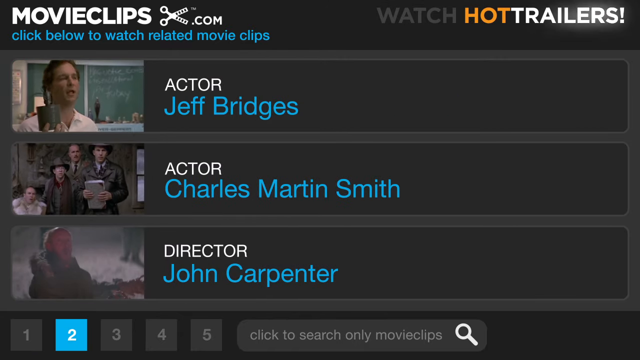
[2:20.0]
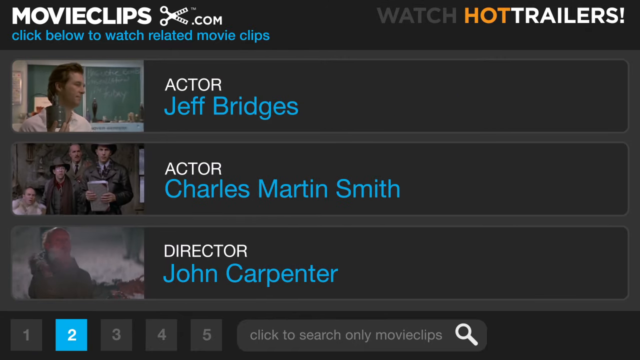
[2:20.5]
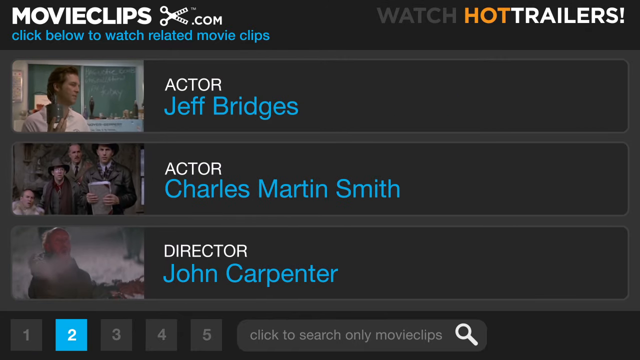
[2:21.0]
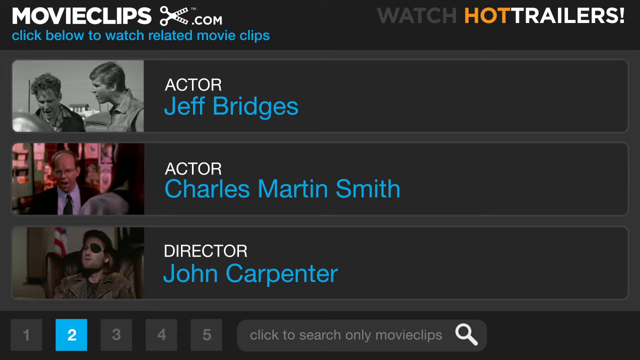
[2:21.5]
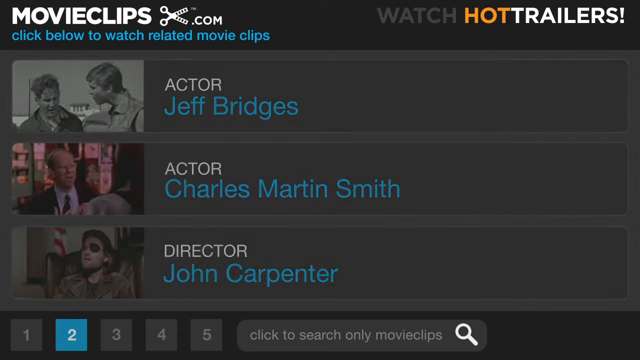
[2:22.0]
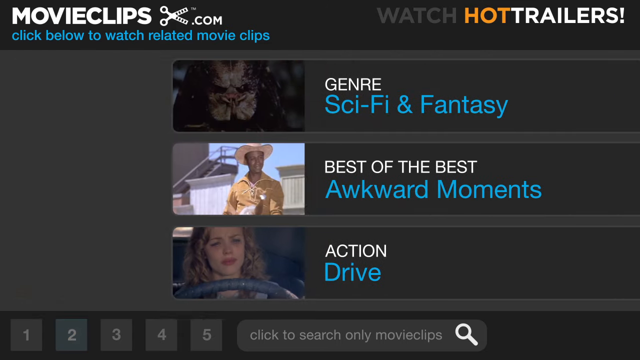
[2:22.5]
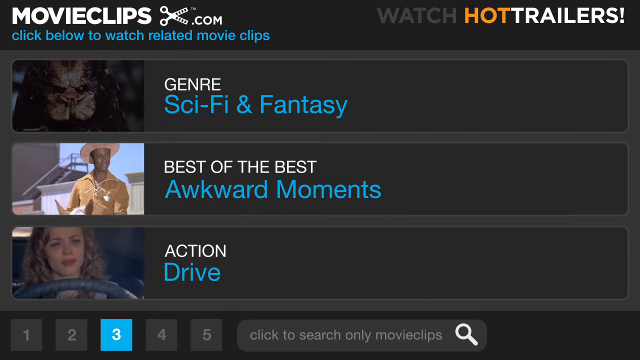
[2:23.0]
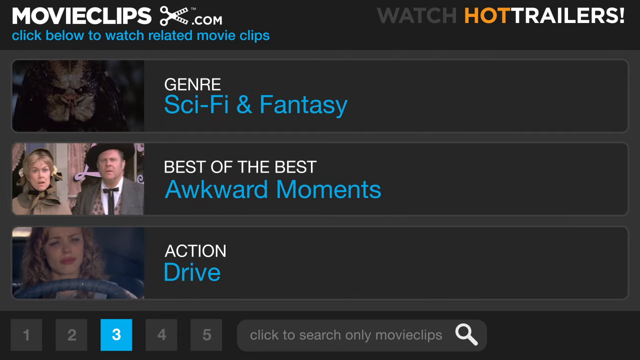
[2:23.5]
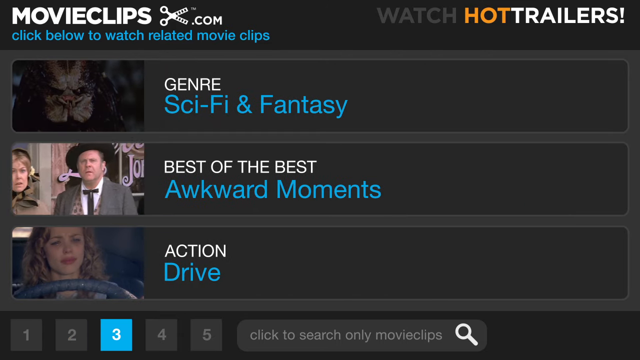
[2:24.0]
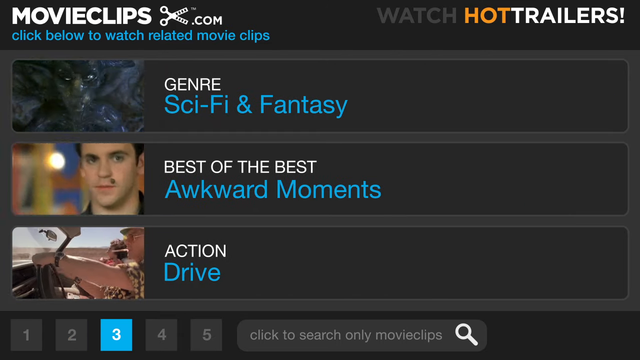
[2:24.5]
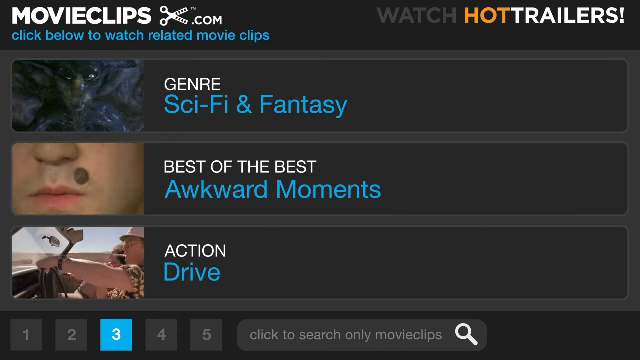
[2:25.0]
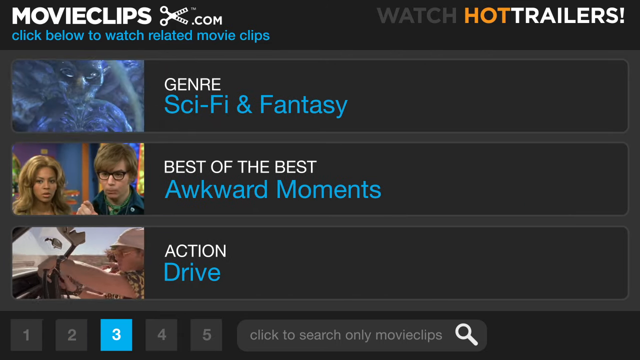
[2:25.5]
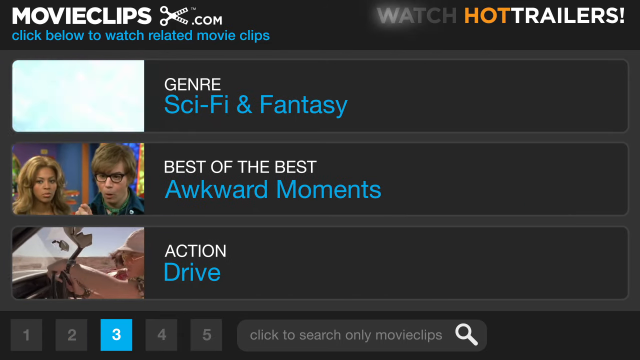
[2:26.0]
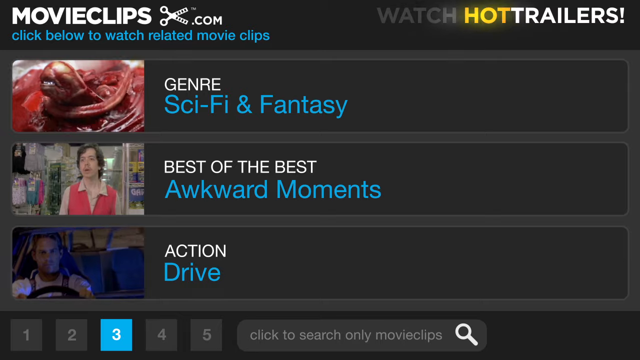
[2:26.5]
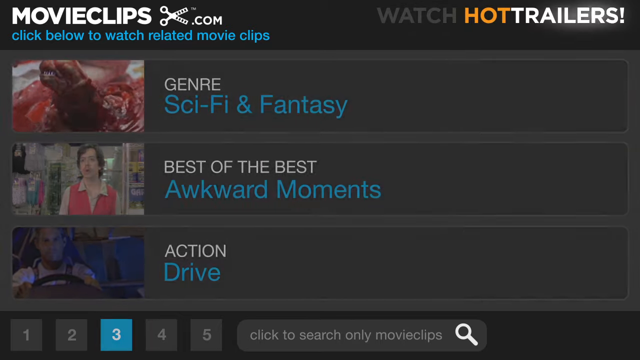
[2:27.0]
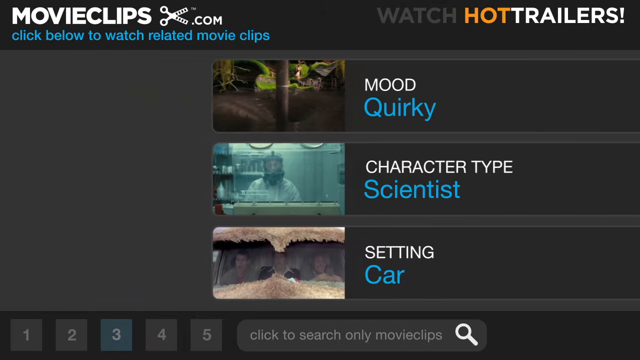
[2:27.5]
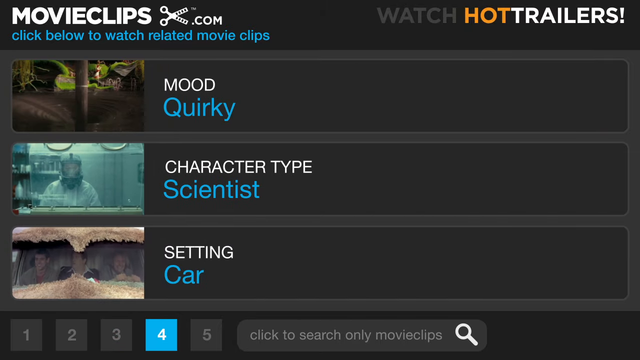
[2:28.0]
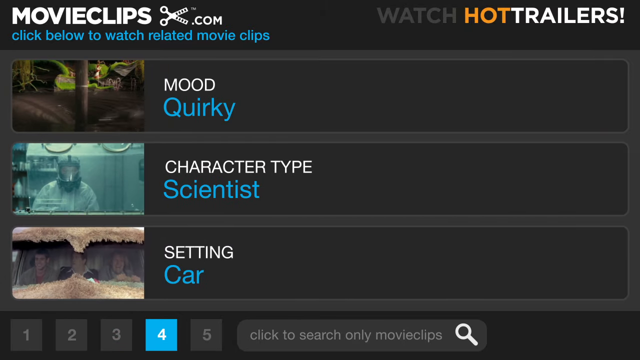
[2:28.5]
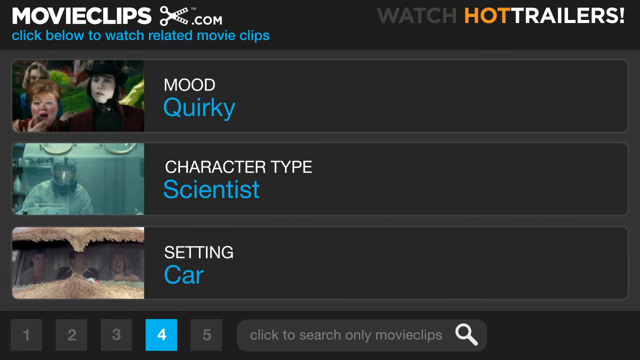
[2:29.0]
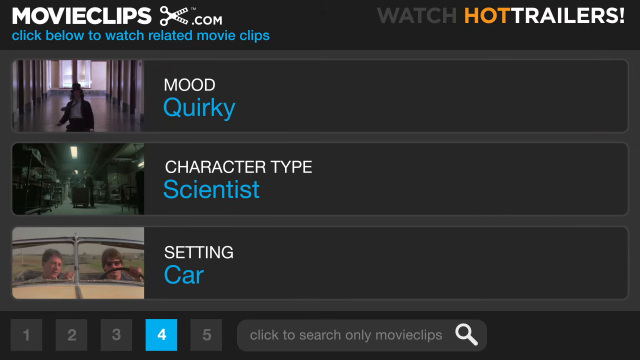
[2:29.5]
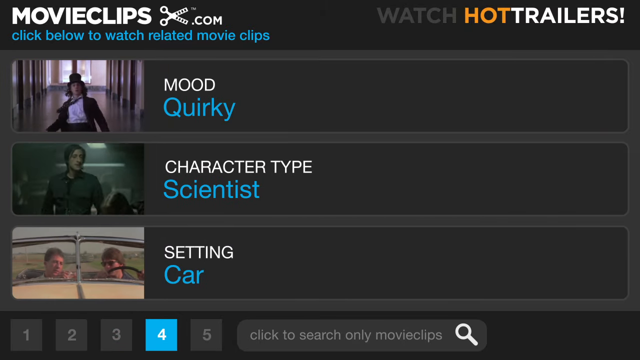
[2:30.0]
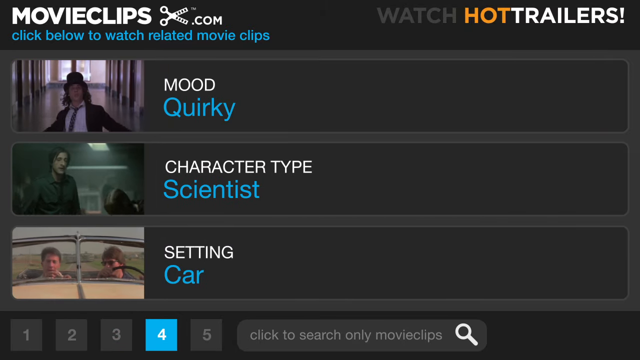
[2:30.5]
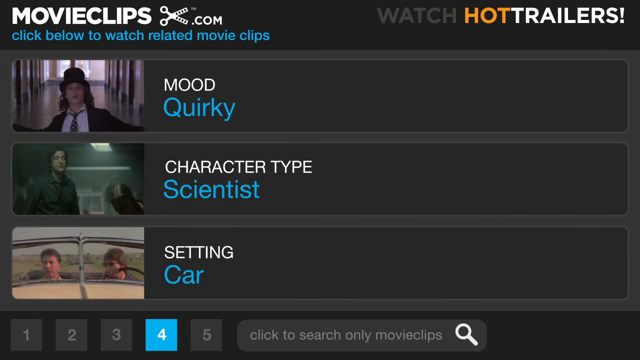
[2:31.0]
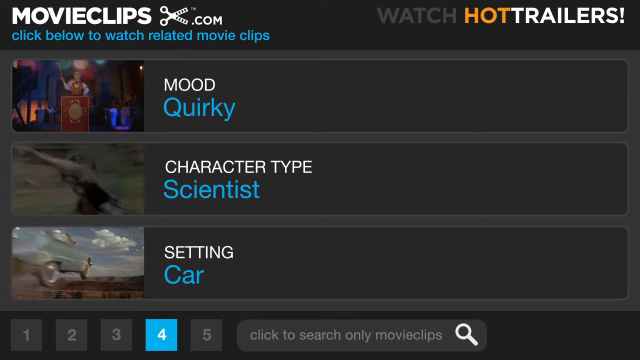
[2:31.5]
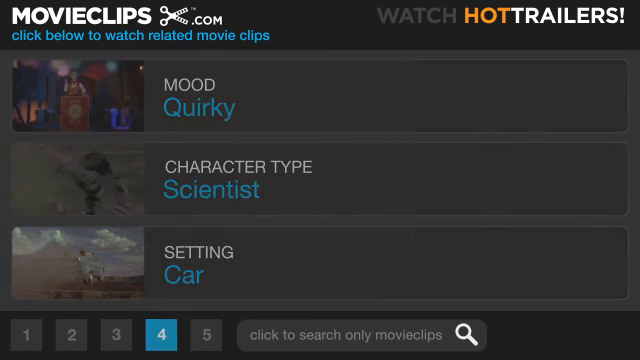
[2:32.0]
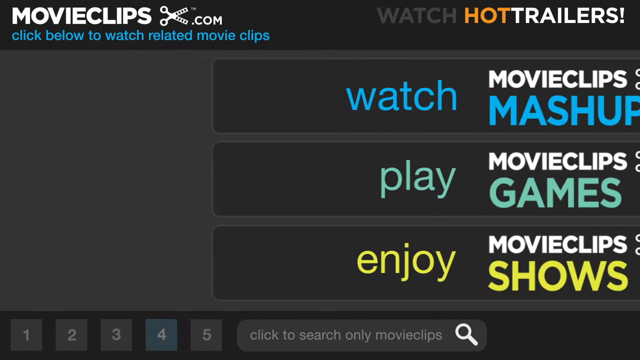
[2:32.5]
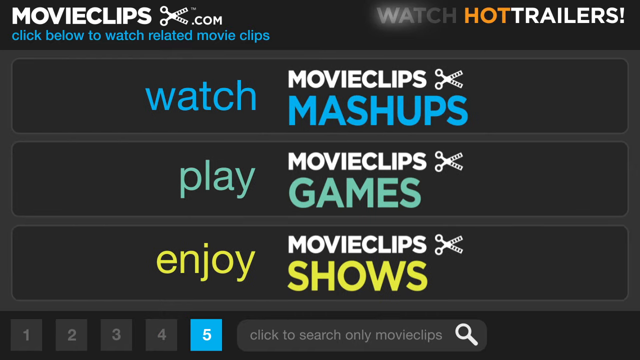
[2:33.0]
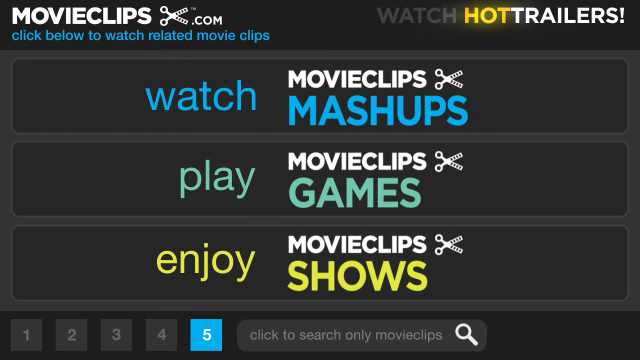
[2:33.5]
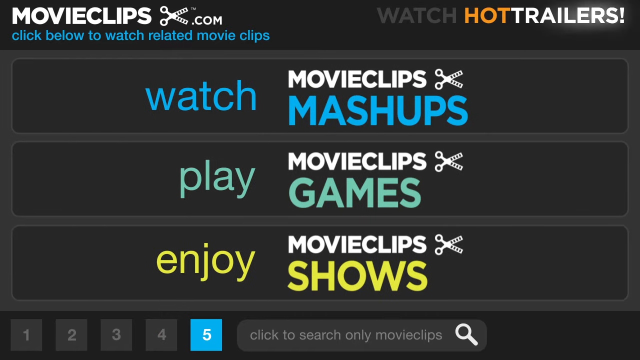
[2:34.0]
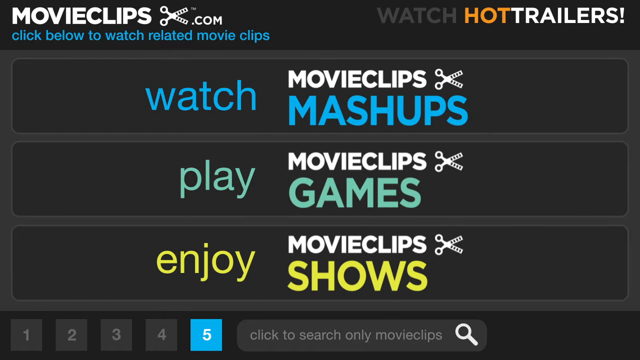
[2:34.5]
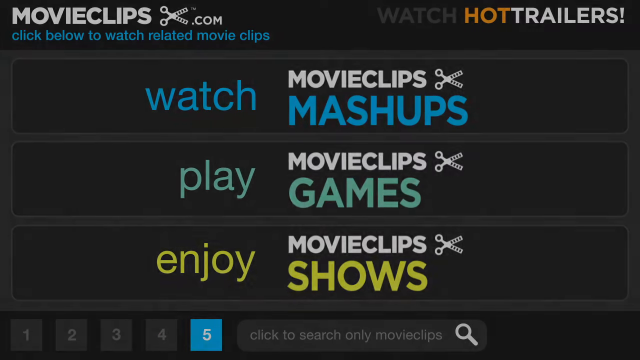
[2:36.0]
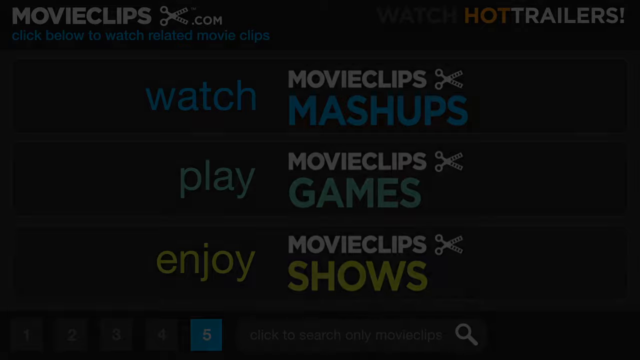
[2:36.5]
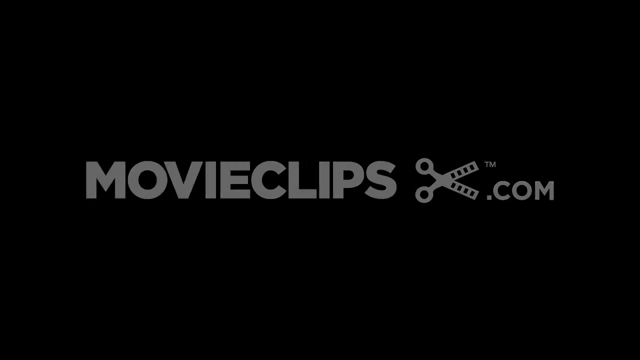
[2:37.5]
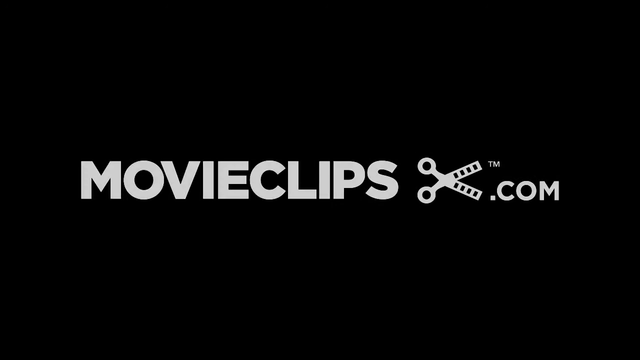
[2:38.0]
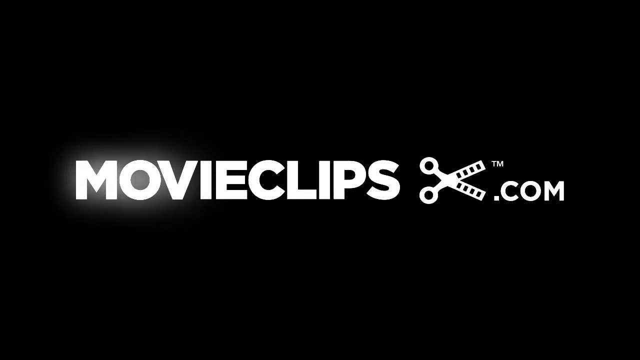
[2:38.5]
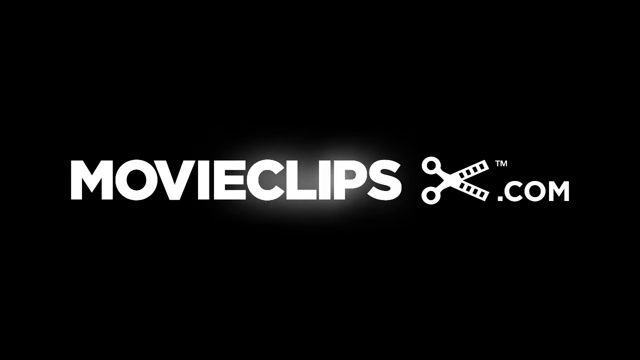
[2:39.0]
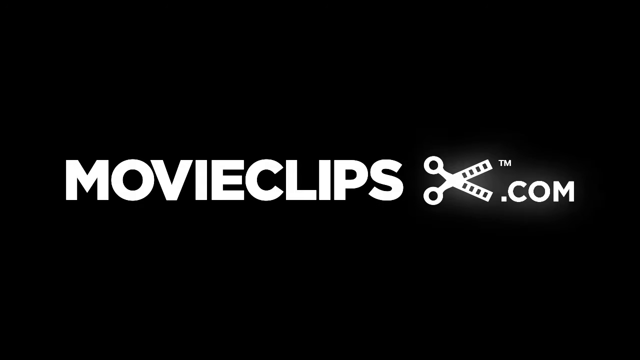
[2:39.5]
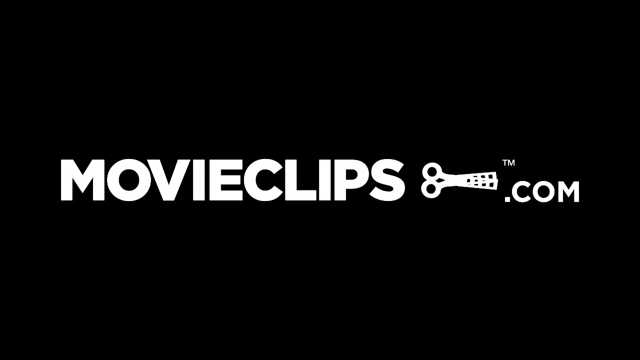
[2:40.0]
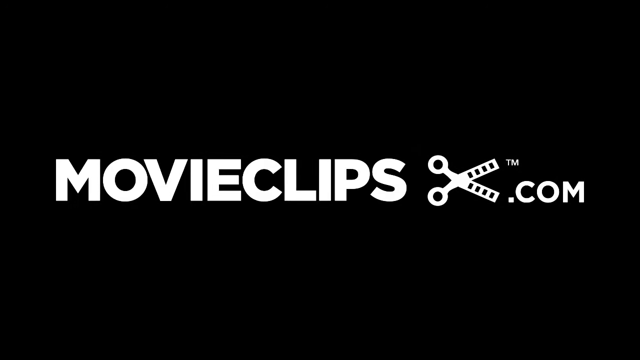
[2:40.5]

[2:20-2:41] What looks like a video clips website is shown, where video clips can be browsed and chosen. One of the movies lists the actor as Jeff Burgess and another lists the actor as Charles Madden. In the words "watch trailers", "watch" is written in yellow and "trailers" is written in white.